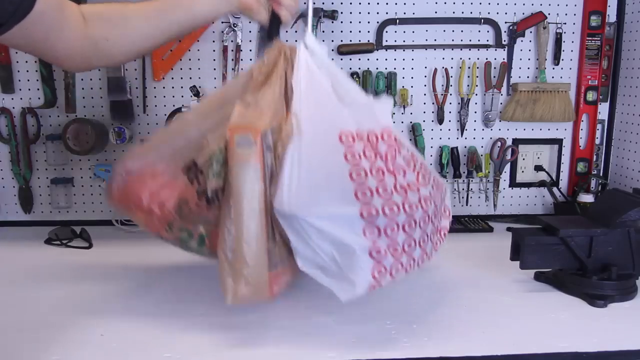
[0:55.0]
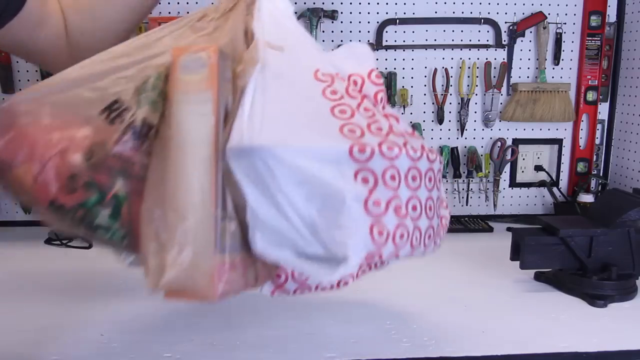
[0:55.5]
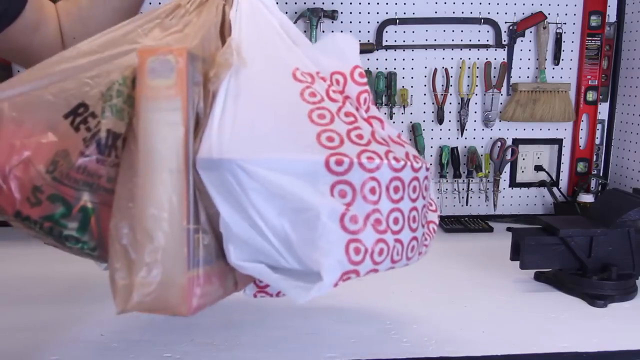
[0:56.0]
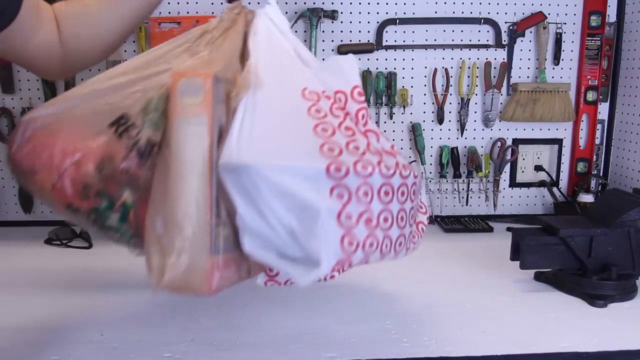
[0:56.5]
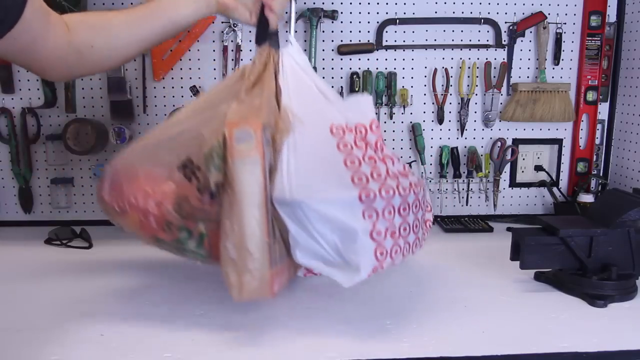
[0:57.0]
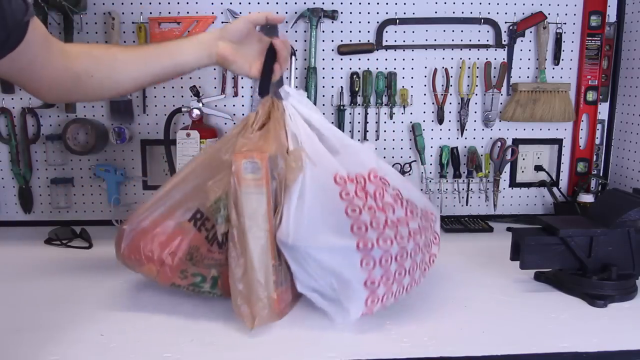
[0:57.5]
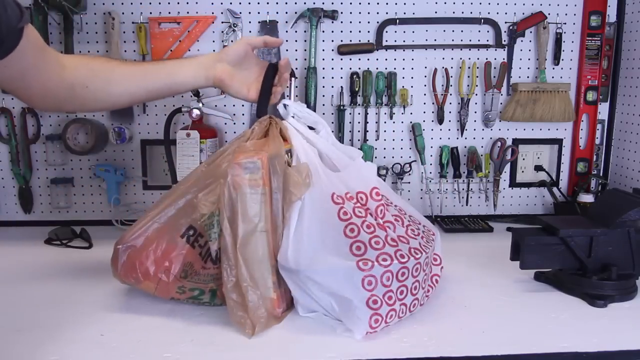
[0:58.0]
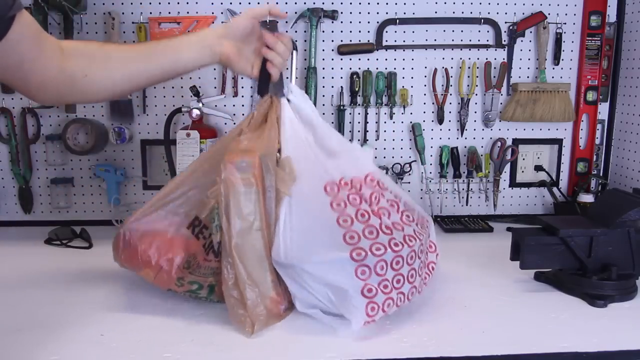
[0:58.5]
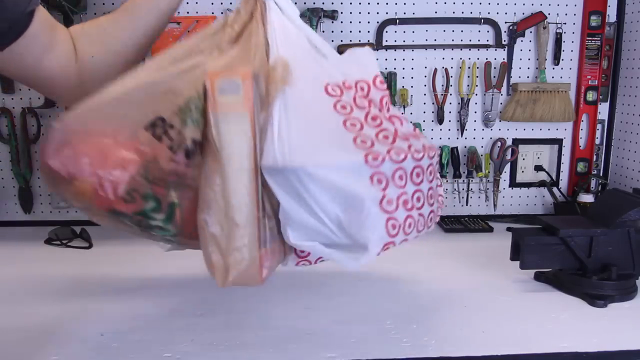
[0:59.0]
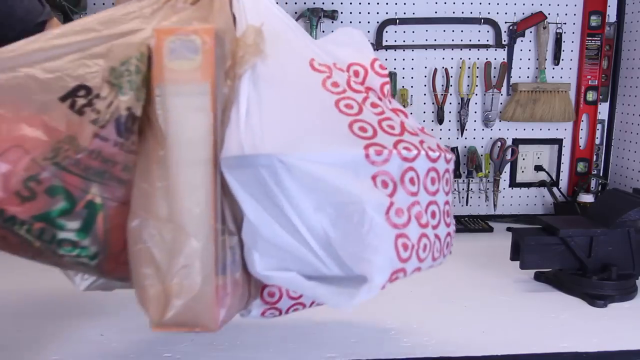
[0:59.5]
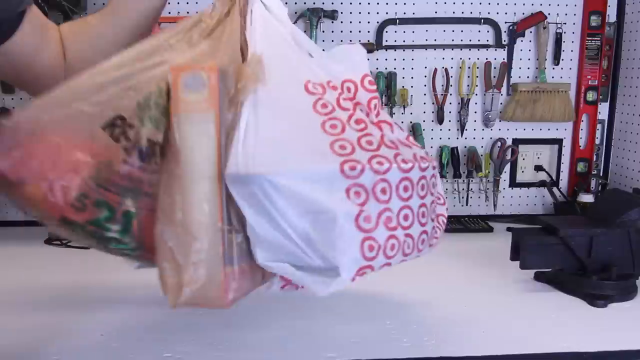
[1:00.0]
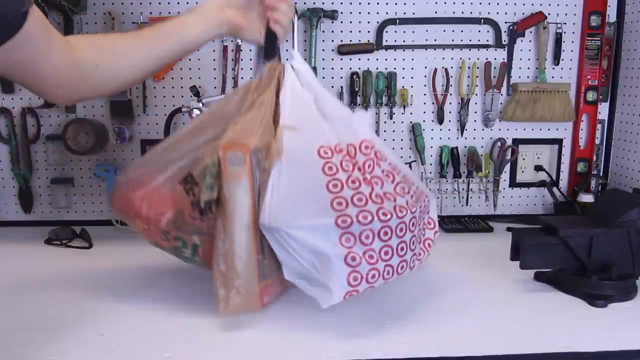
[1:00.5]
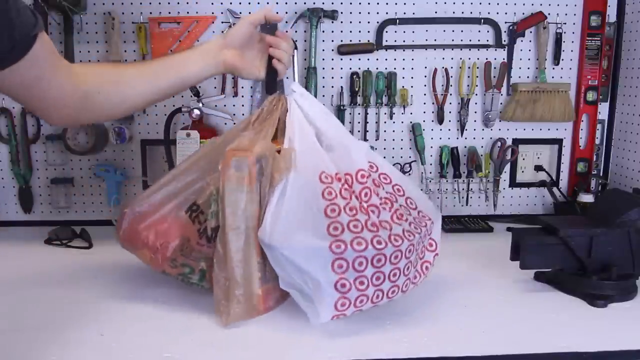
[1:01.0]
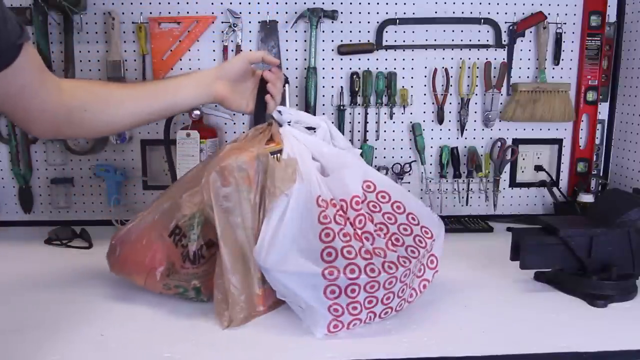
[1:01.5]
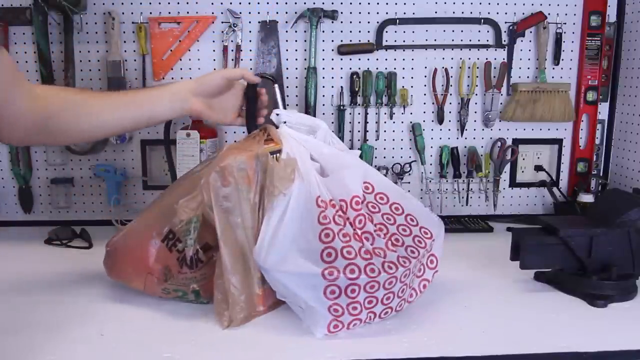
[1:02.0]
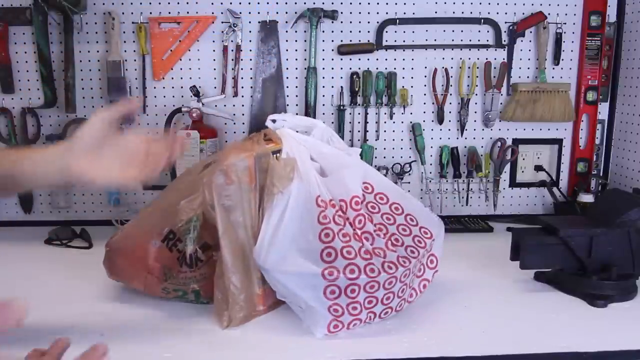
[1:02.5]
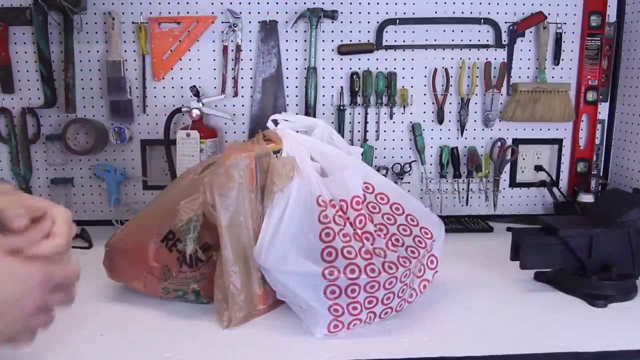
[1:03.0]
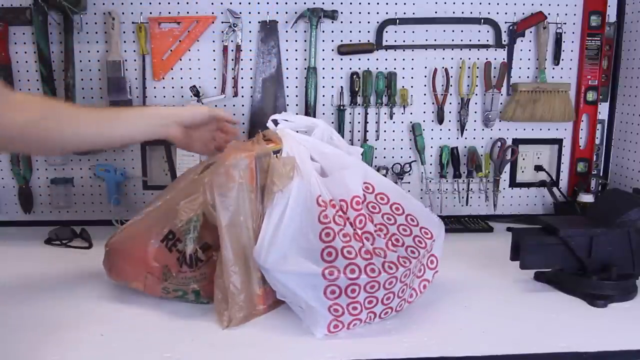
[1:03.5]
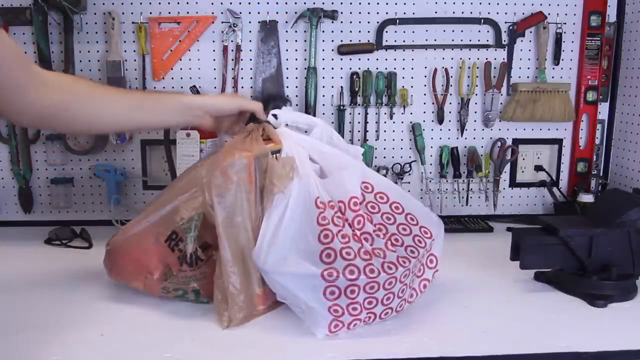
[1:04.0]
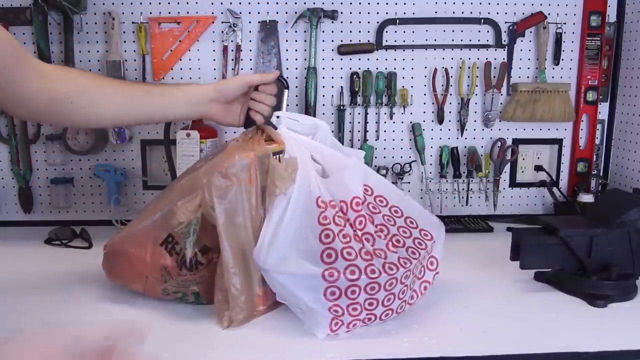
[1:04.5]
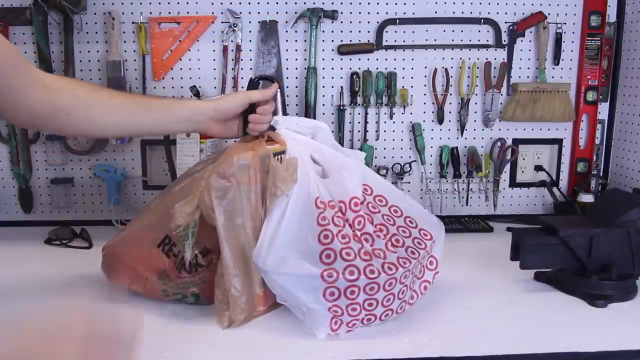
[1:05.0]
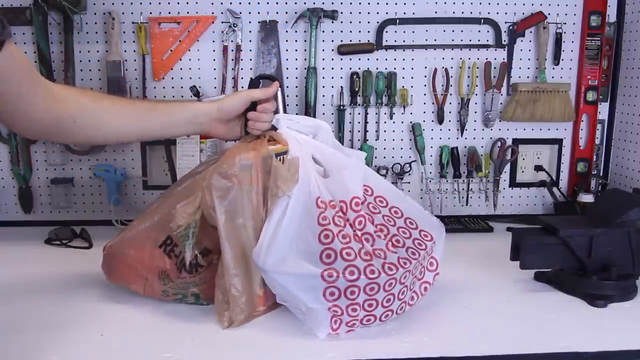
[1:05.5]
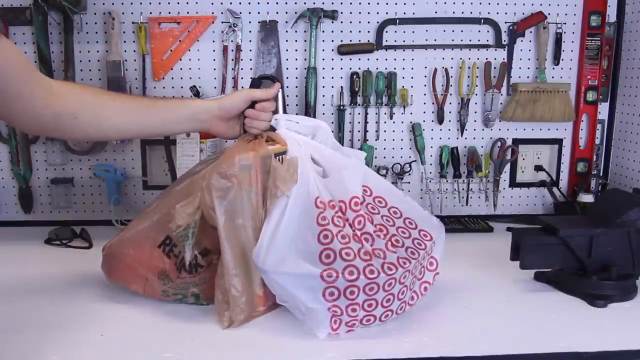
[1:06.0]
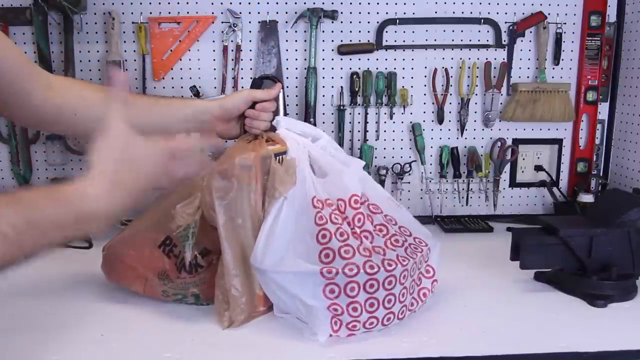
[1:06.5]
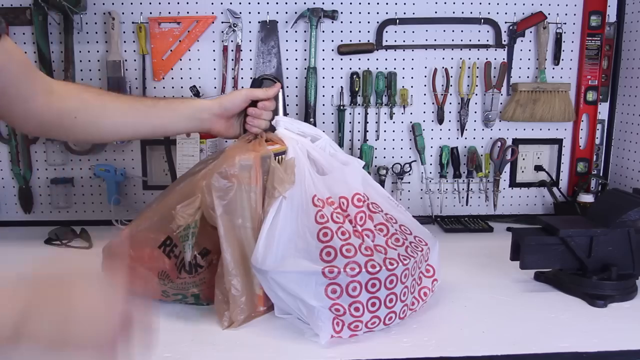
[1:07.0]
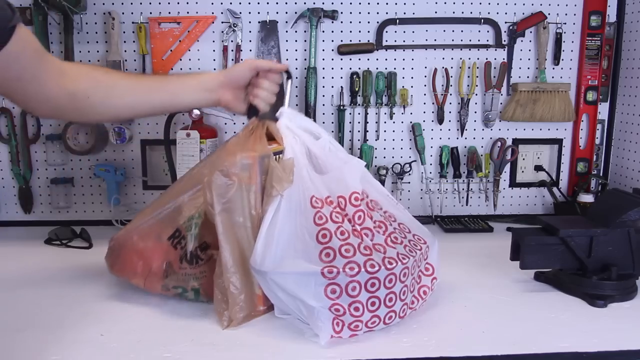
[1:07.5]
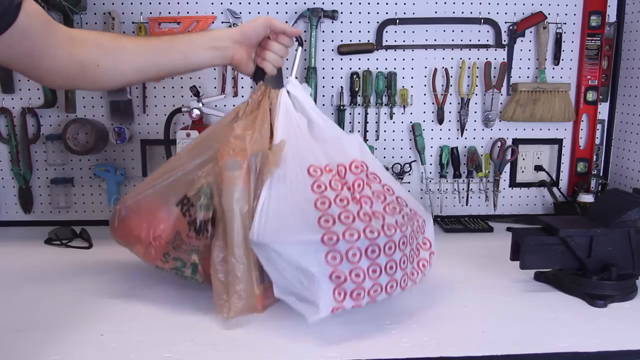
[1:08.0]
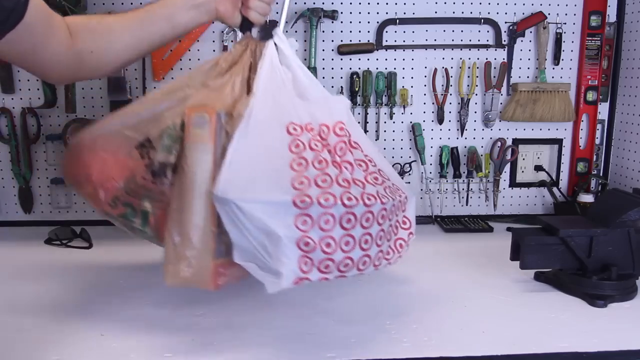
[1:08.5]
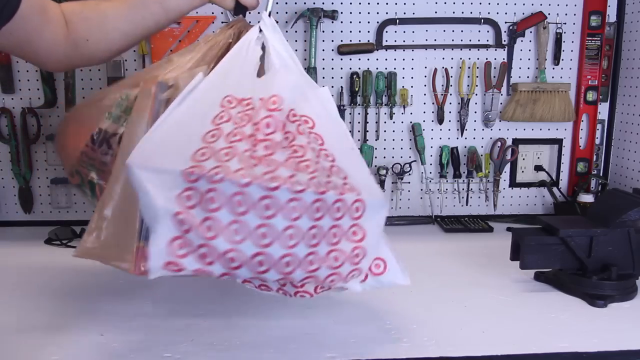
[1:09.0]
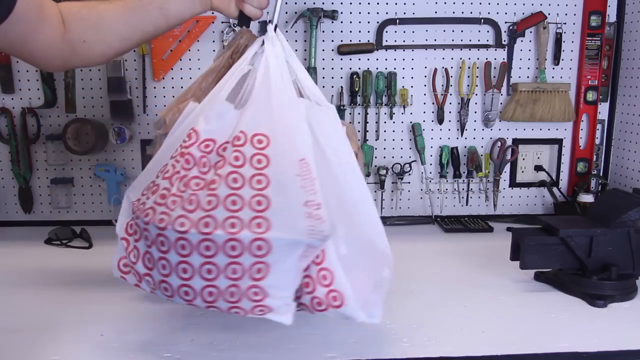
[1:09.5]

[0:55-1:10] The person lifts the bag with the climber's tool to show how easy it is to carry groceries with it, gesturing as they do. The background remains the same workshop, with a large variety of tools on the back wall. The bag is let down and lifted up again to show how easily it can be raised with the tool.